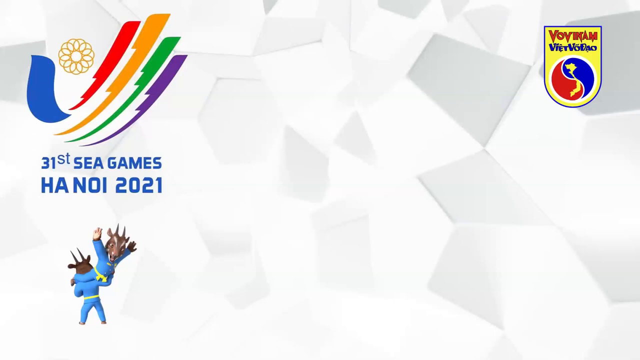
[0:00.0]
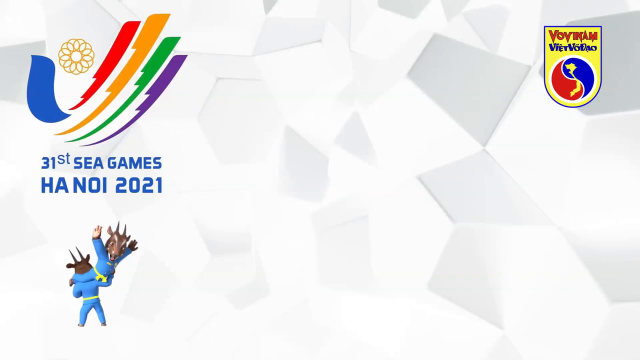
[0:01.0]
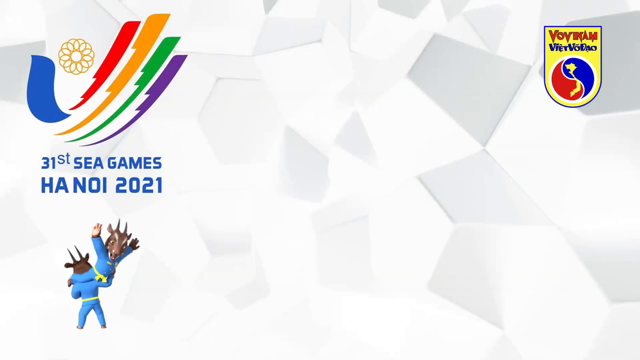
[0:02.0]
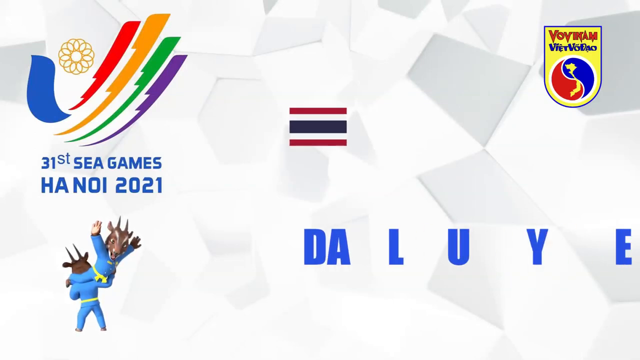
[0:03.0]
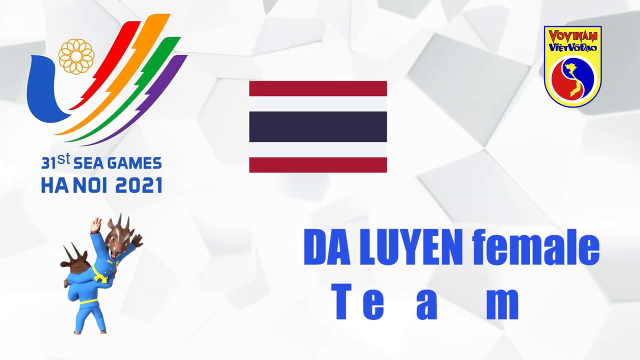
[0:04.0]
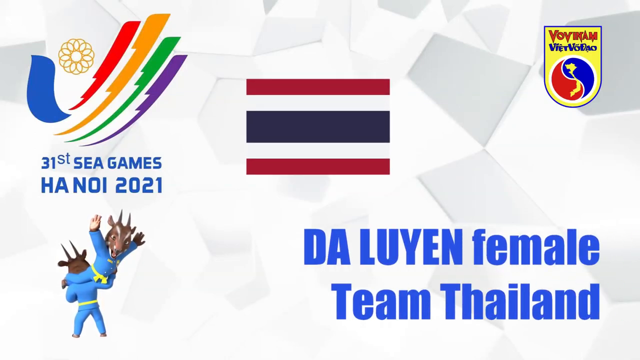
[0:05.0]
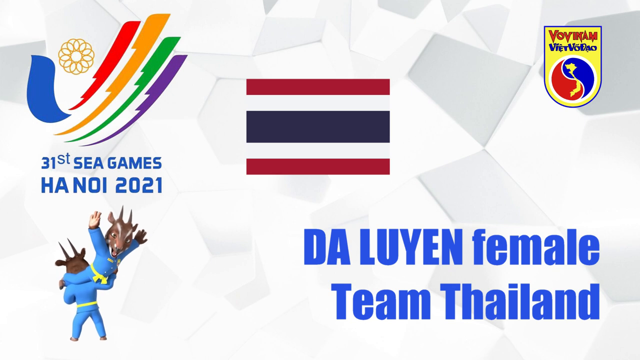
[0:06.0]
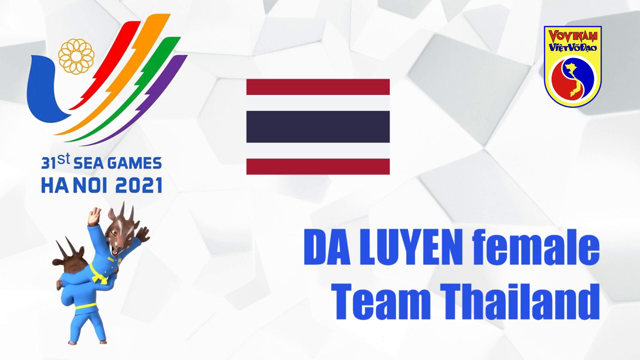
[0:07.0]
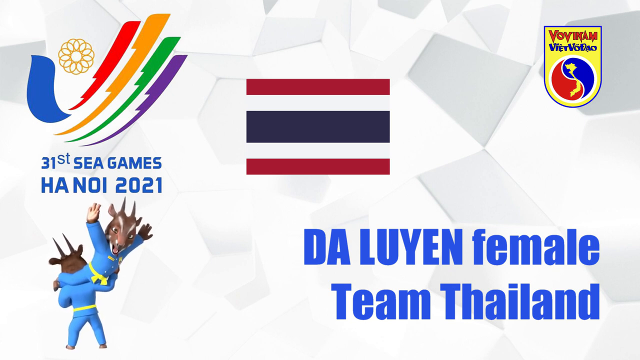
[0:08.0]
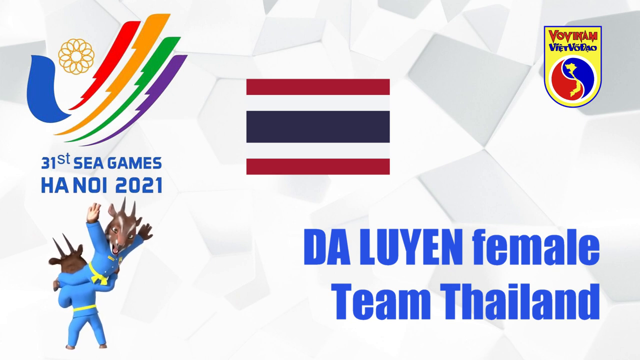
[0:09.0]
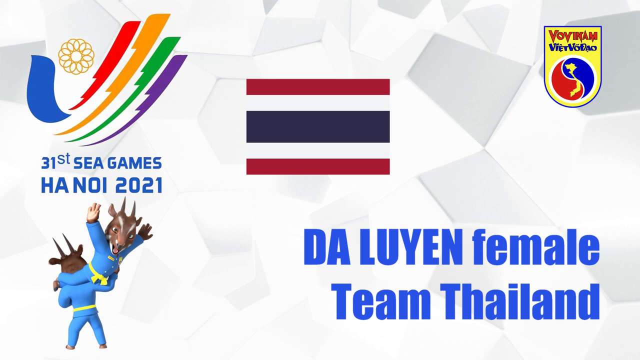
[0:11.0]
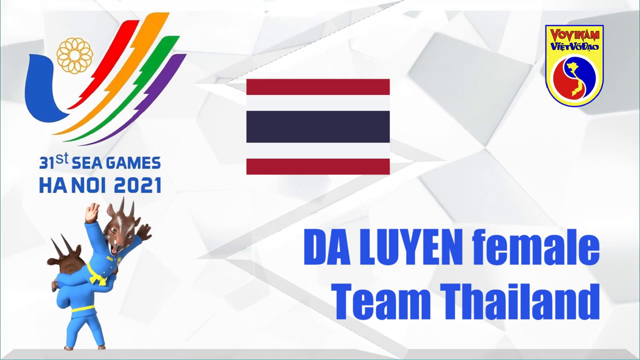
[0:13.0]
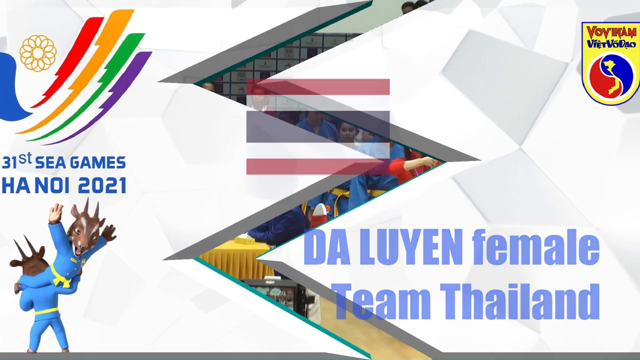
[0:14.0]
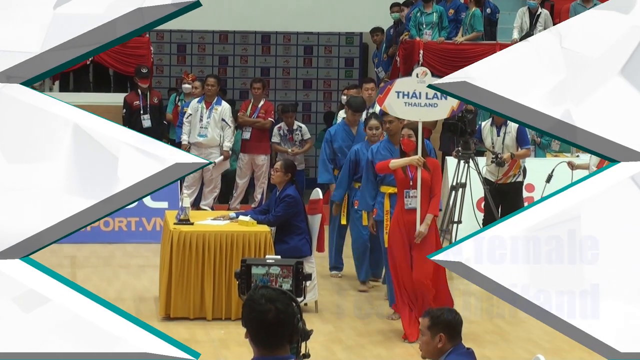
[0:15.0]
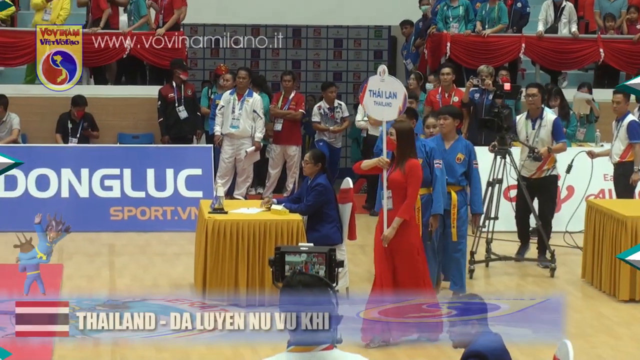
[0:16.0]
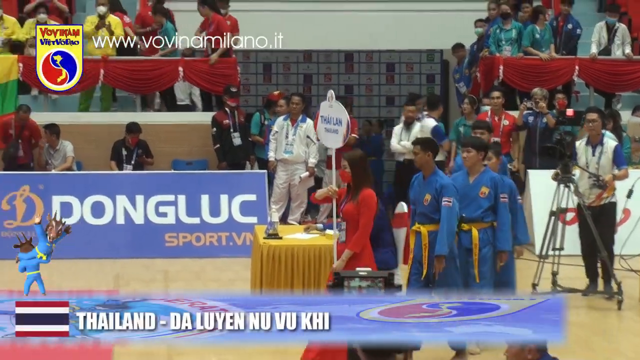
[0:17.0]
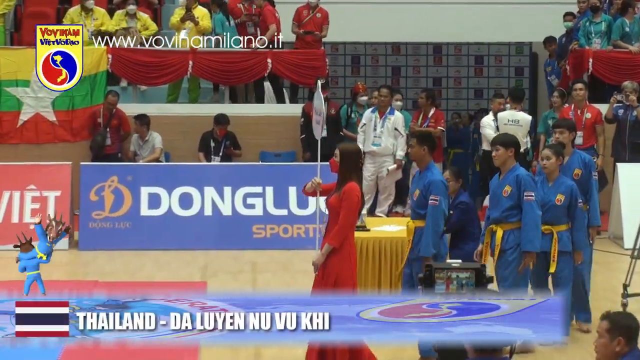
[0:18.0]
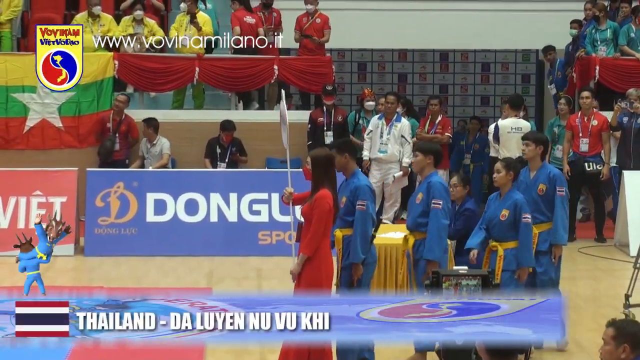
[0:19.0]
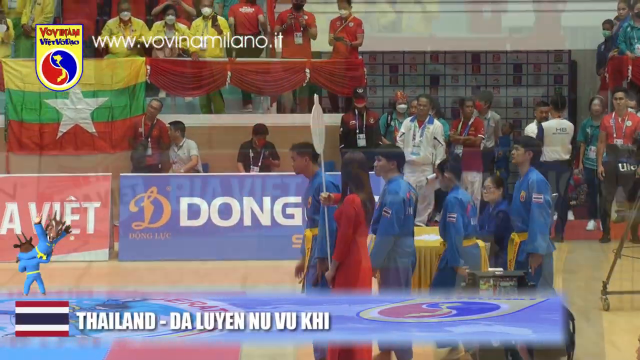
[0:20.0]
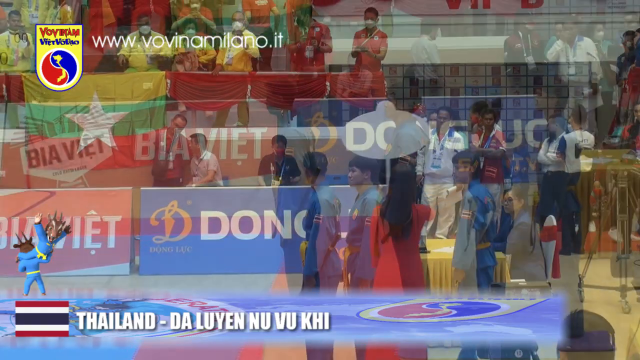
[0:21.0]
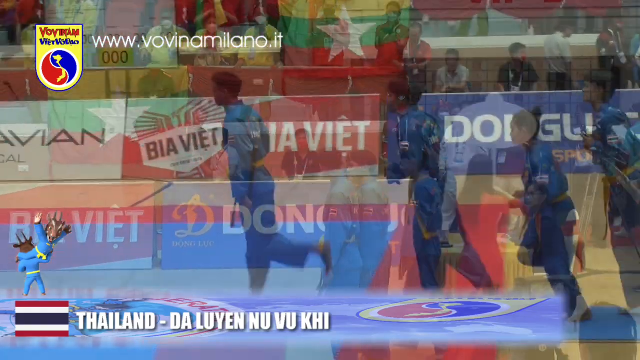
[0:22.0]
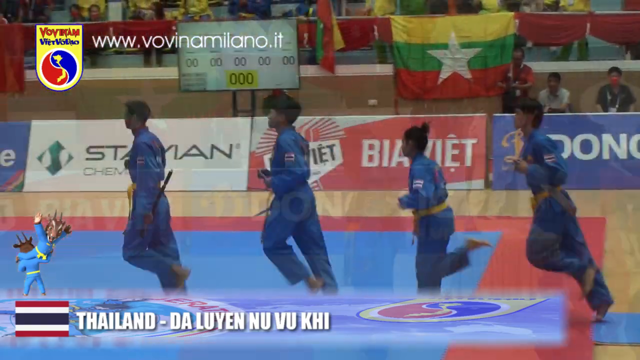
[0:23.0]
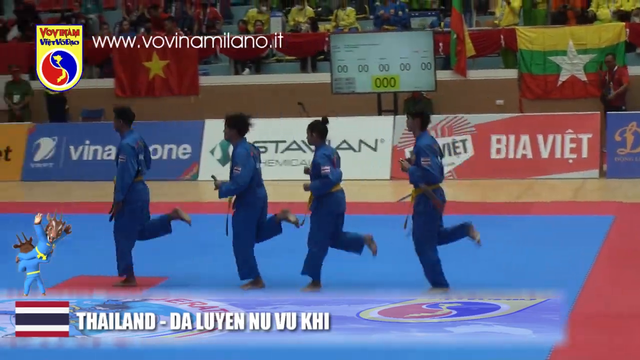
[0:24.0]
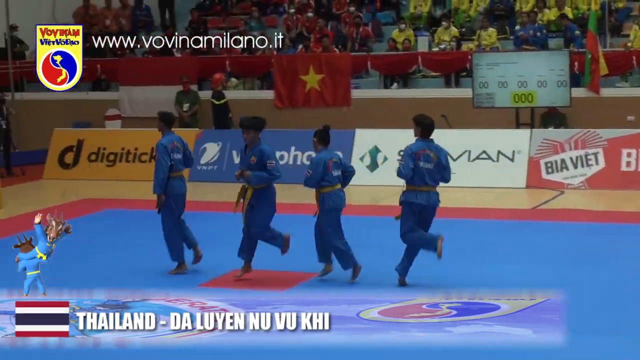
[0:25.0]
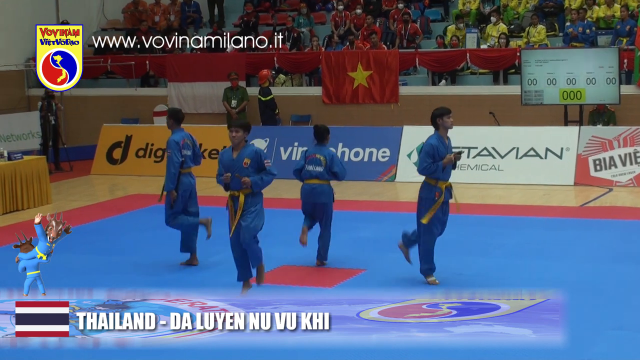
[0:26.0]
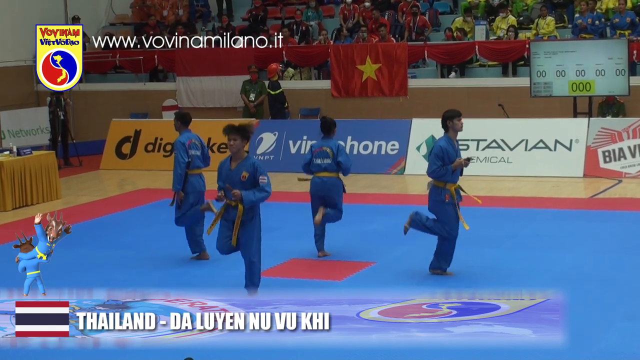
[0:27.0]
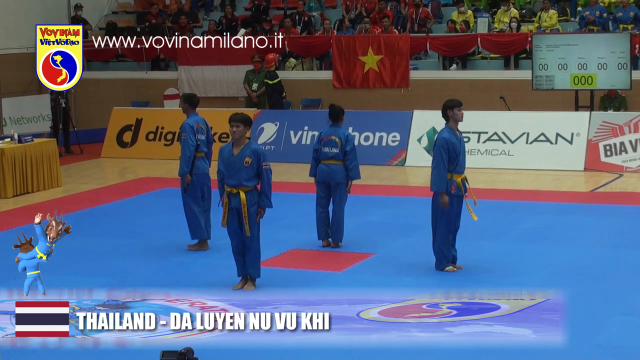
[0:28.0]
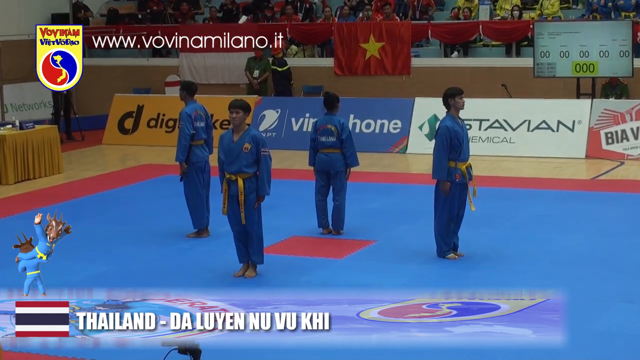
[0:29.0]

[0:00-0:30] An animated presentation introduces the Da Luyen female team from Thailand at the 31st SEA Games in Hanoi 2021. The title image has a small goat-like mascot in a blue karate uniform with a yellow belt. The SEA Games logo consists of four swish lines in various colors such as red, orange, green and purple. In the center of the image is the Thai flag, with horizontal bands: red at the top, then white, then a thicker navy blue band, then white, then red. The background of the title slide has irregular shapes in red, white and grey. The title image then has an animated transition revealing the Thai national team walking out onto the competition arena in blue uniforms with yellow sashes. A lady in a red dress in a traditional Vietnamese style holds a plaque that says "Thailand". Officials sit behind banners, and coaches fill the space.